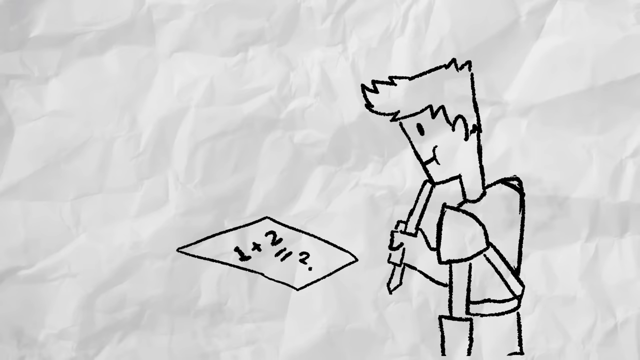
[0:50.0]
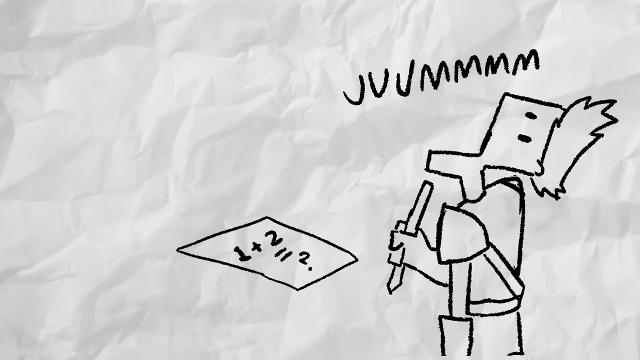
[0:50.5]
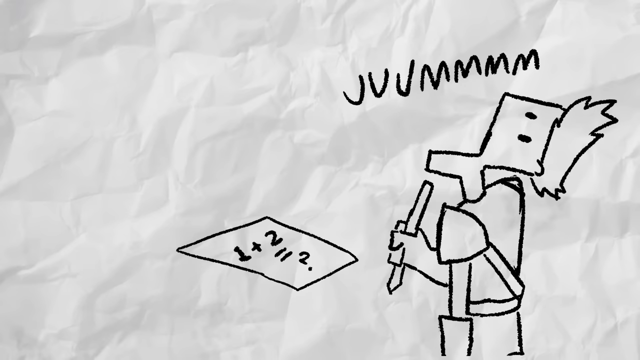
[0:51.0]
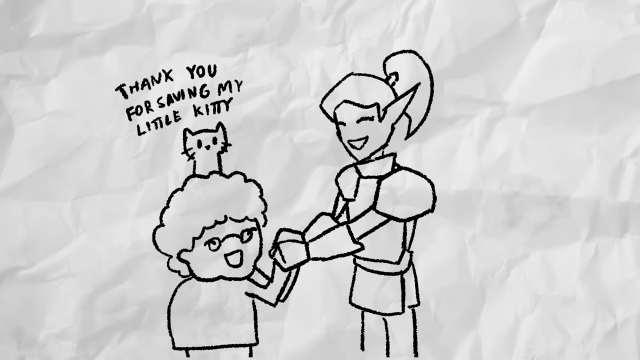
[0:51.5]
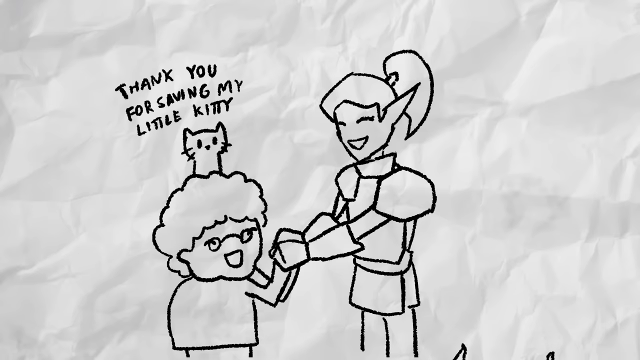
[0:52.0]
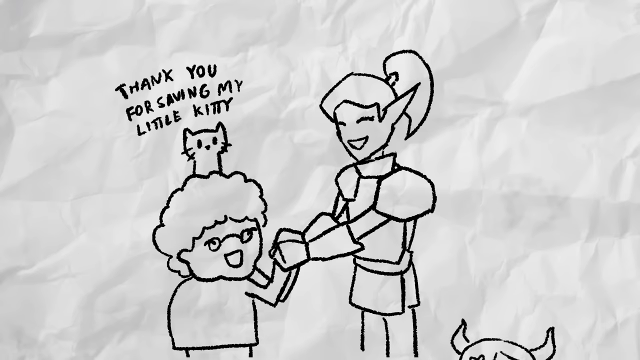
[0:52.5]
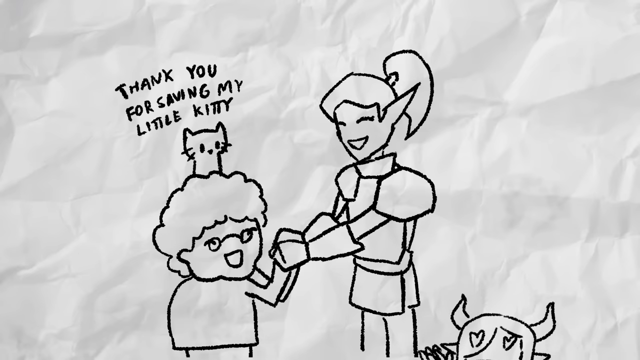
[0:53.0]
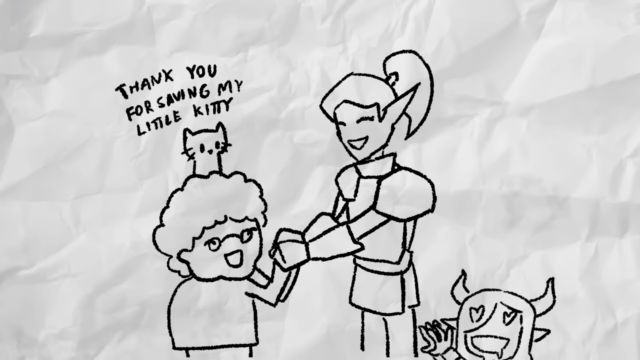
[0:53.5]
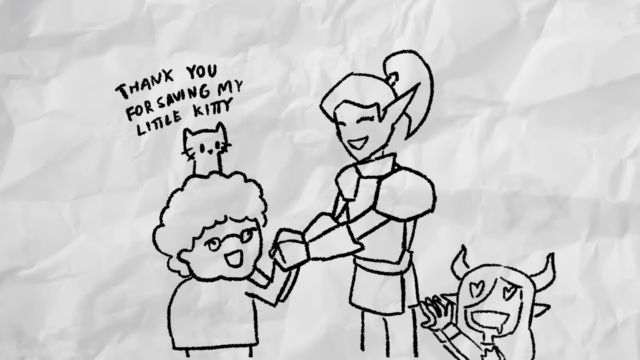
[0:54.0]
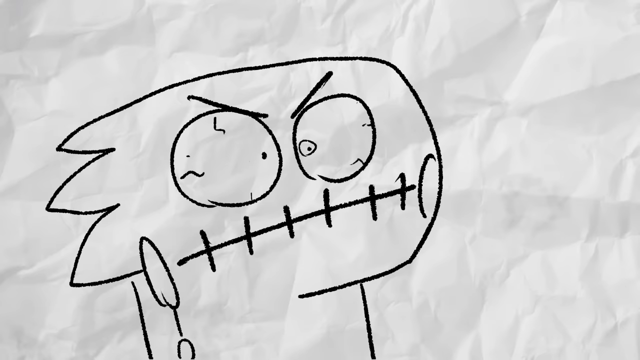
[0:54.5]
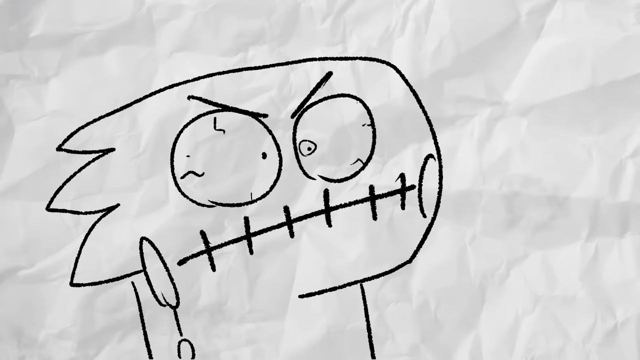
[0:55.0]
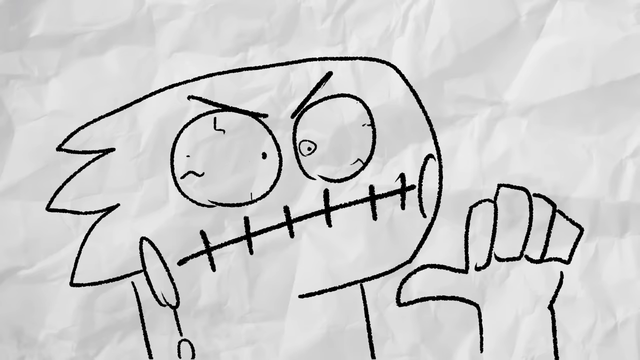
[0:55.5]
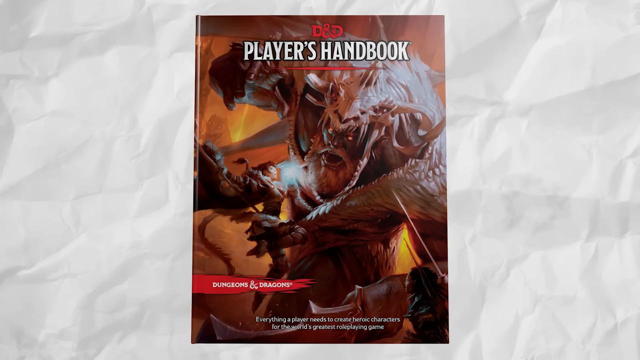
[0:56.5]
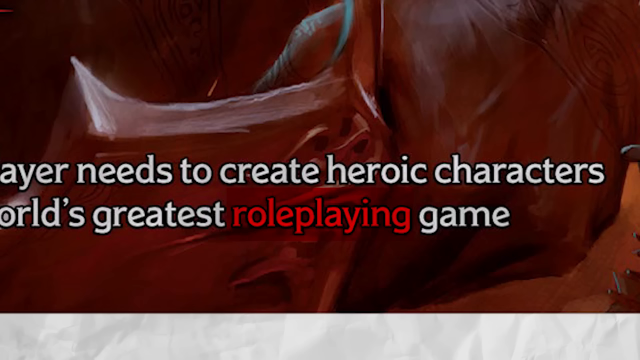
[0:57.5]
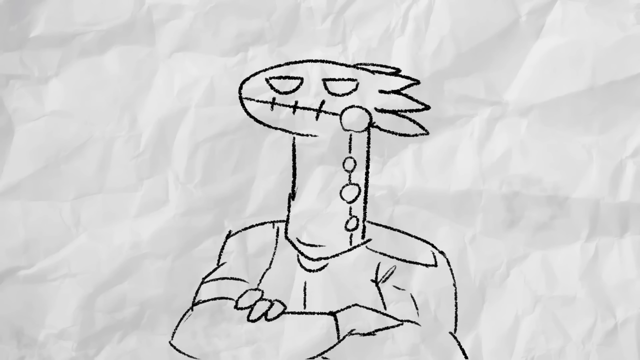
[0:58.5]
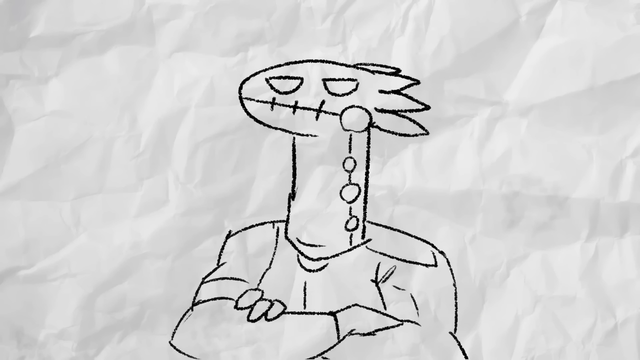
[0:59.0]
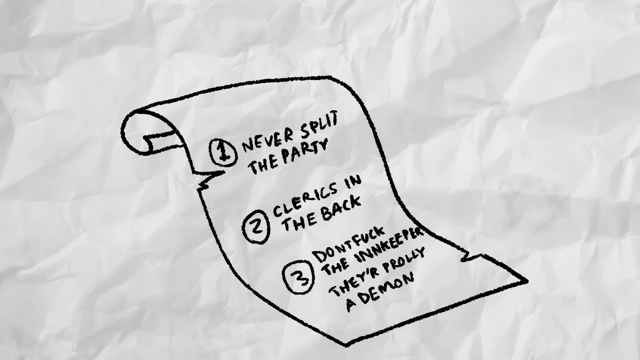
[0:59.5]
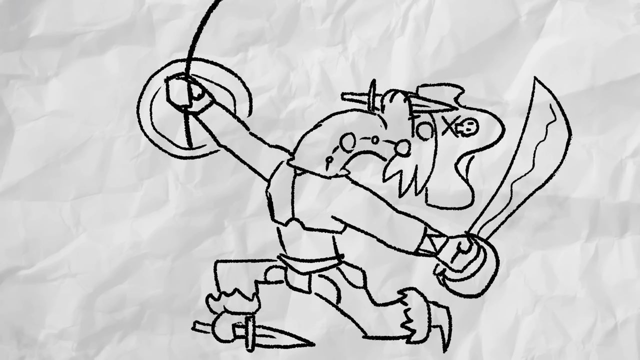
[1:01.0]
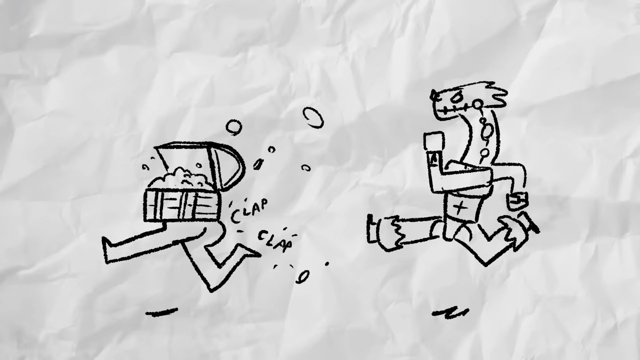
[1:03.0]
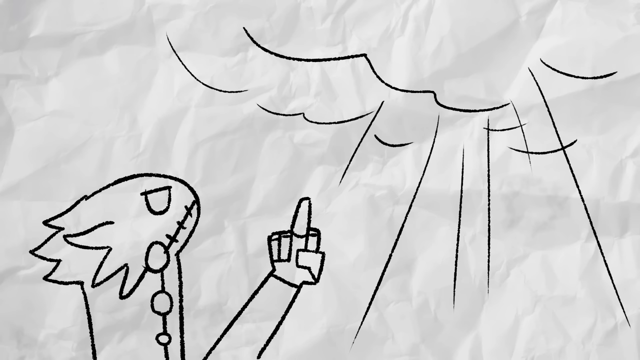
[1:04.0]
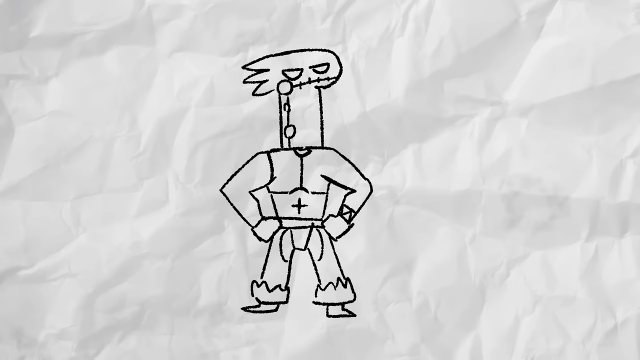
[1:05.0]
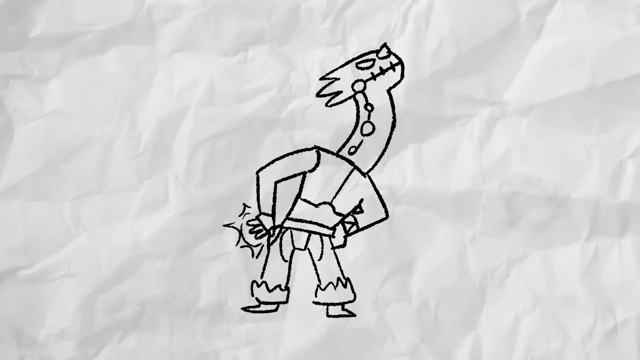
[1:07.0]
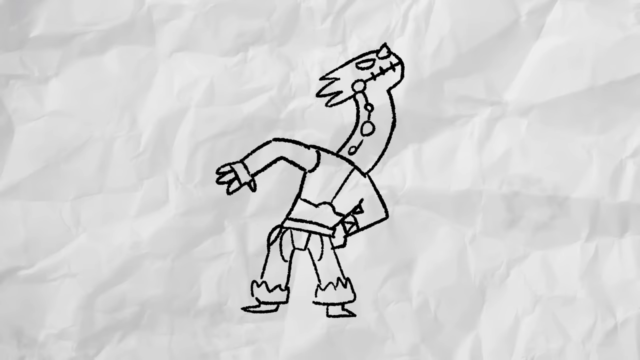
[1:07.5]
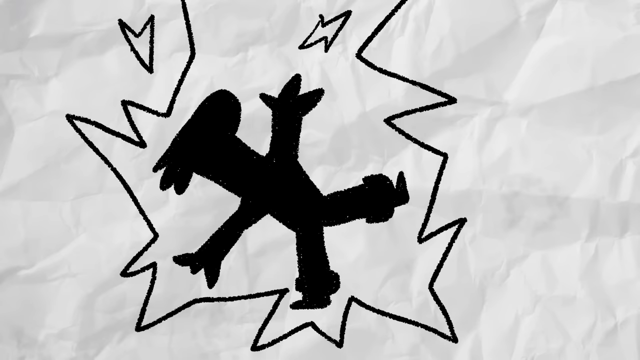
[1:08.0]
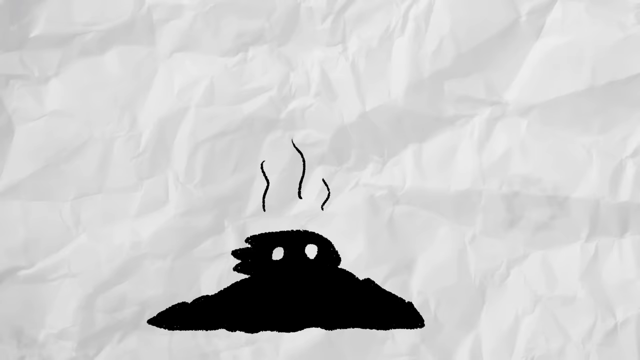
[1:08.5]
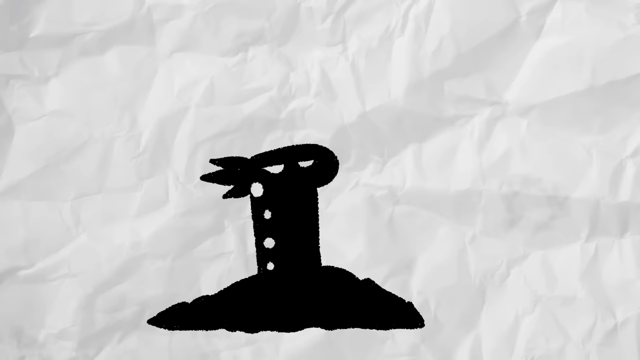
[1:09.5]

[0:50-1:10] Against a white crumpled paper background, a drawn character holds what looks to be a pencil, and a piece of paper on the ground says "1 plus 2 equals ?". He puts his head back with a bunch of scribble above him. The scene transitions to a drawing of a girl and a young boy with curly hair, with a cat behind him and text saying "thank you for saving my little kitty." A character with some thorns comes up from the bottom, lifting her arm out. Another character appears very close up, looking really mad; he lifts his hand and sticks his thumb out, pointing at himself. The scene transitions to a book in color that says "D&D, Player's Handbook, Dungeons and Dragons, everything a player needs to create heroic characters for the world's greatest roleplaying game," and it zooms in on the area where it says "roleplaying." One of the drawn characters crosses their arms. A piece of paper says "1, never split the party, 2, clerics in the back, 3, don't fuck the innkeeper, they're probably a demon." Another character with a sword in his hand bends back and sort of kneels forward. Another character runs at what looks to be a person's legs and a box of gold or something that says "clap clap." A character sticks his middle finger up at the sky. A character puts his hands on his hips and slaps his butt repeatedly. A character sort of goes crazy, moving around, and then appears to get burnt and falls to the ground.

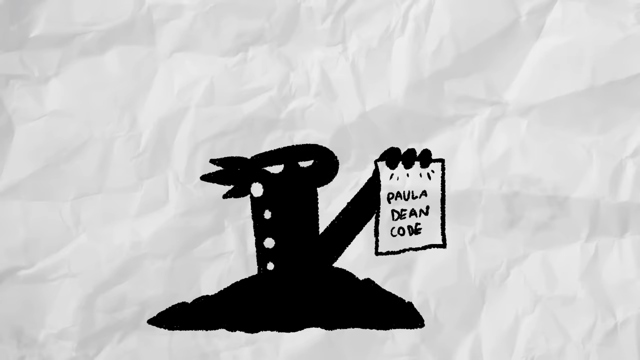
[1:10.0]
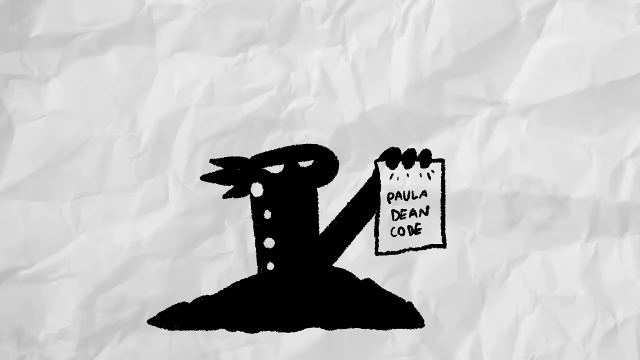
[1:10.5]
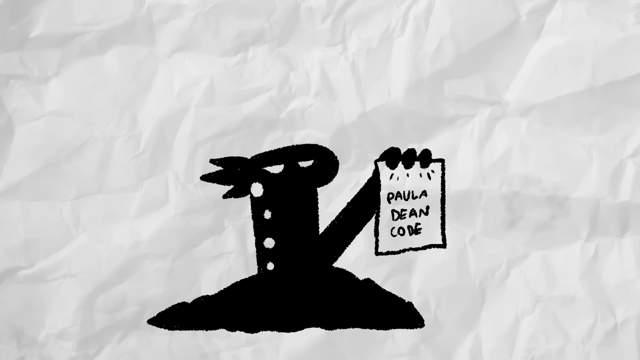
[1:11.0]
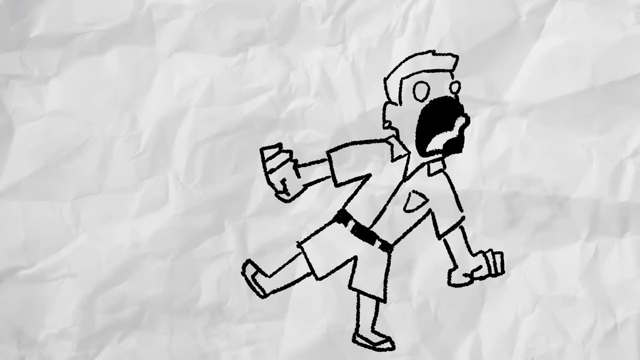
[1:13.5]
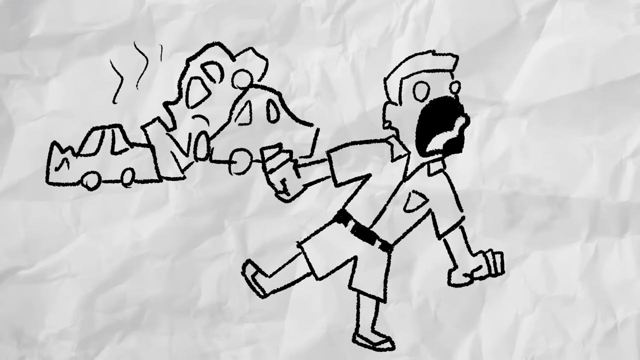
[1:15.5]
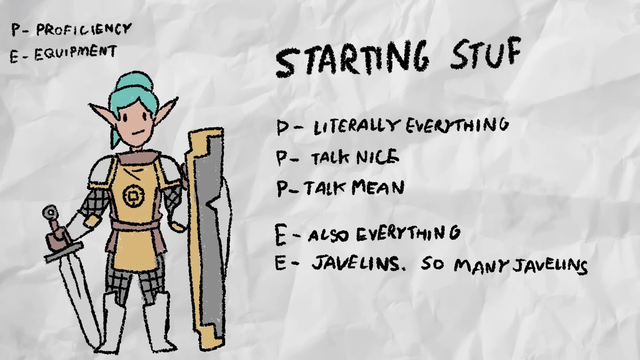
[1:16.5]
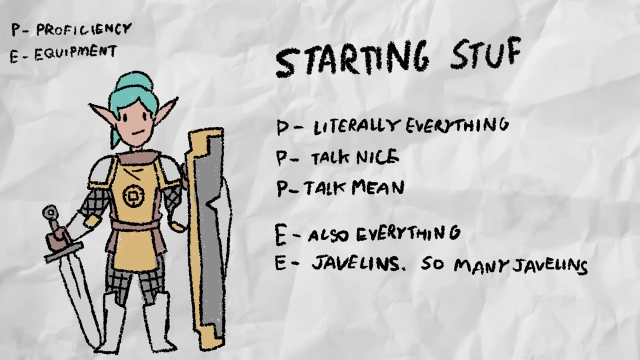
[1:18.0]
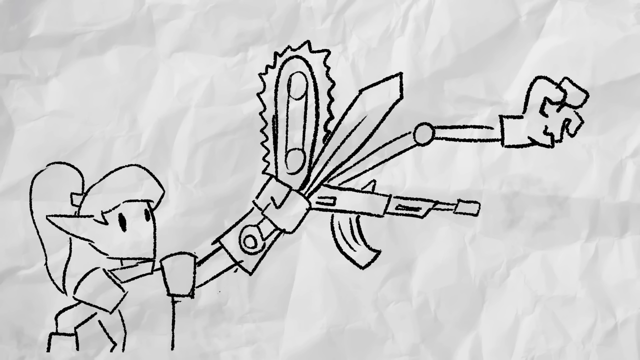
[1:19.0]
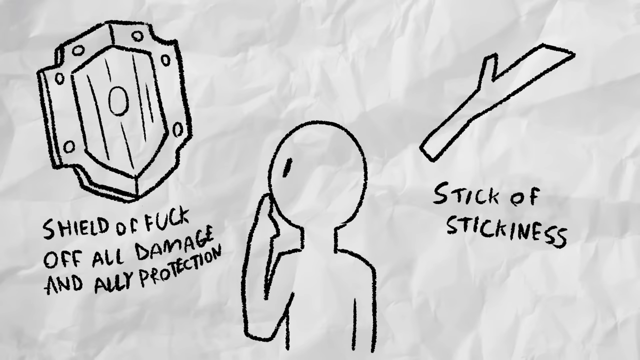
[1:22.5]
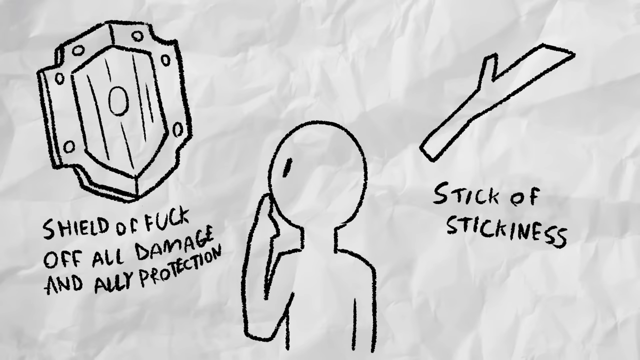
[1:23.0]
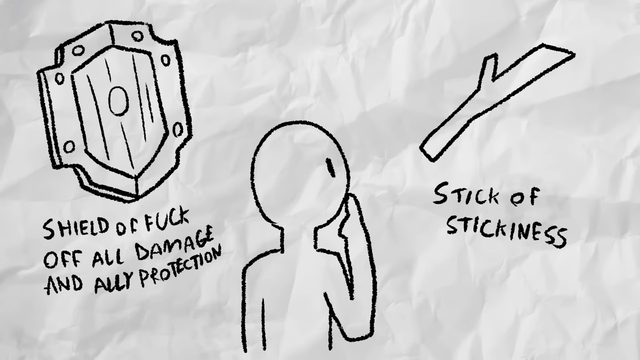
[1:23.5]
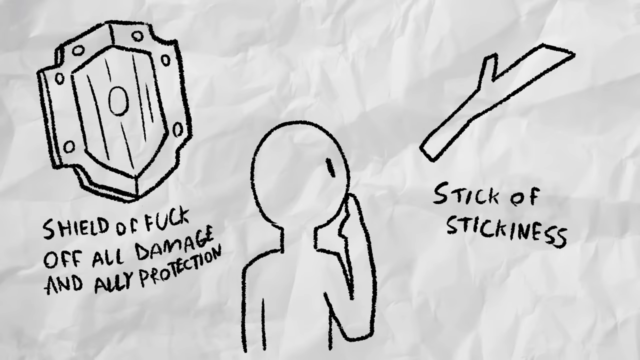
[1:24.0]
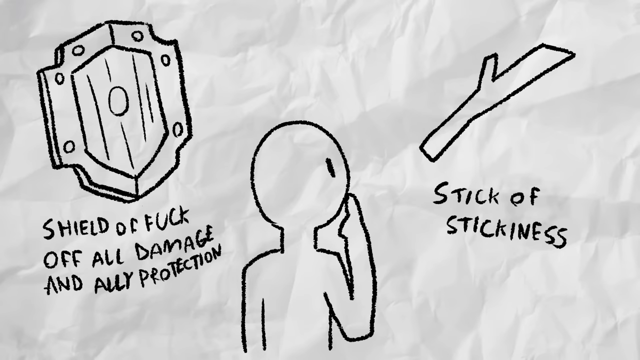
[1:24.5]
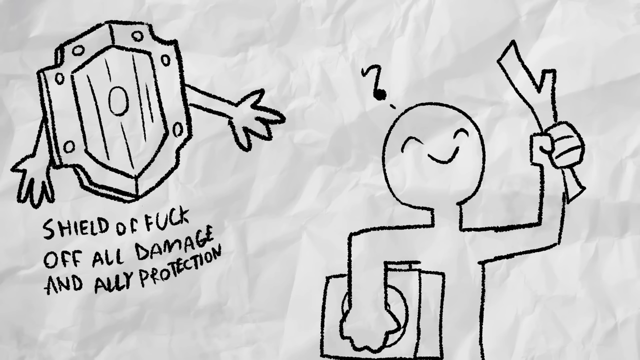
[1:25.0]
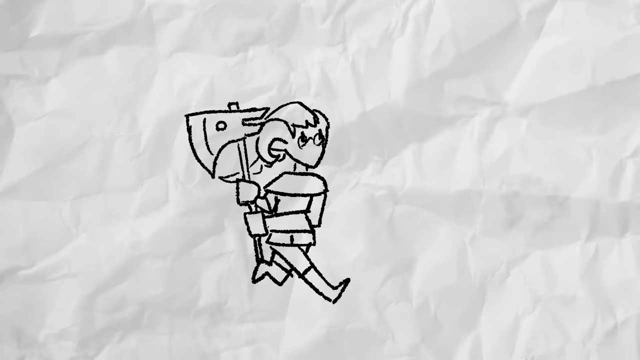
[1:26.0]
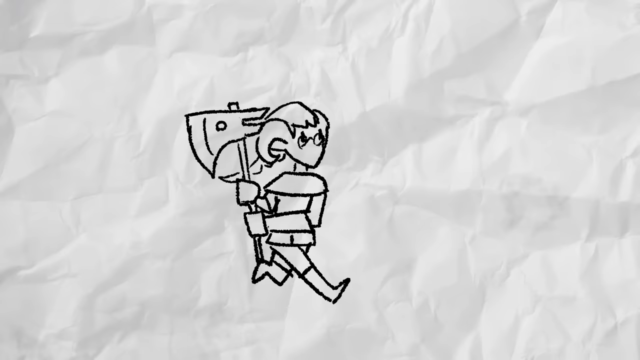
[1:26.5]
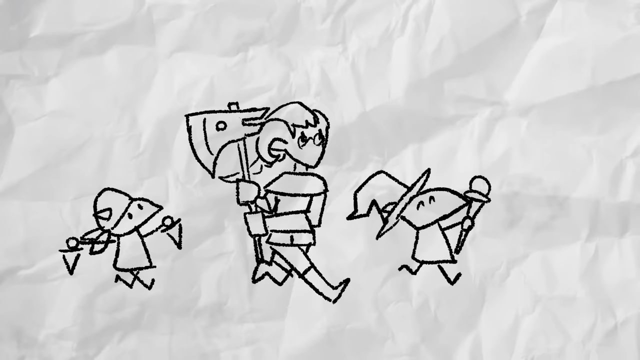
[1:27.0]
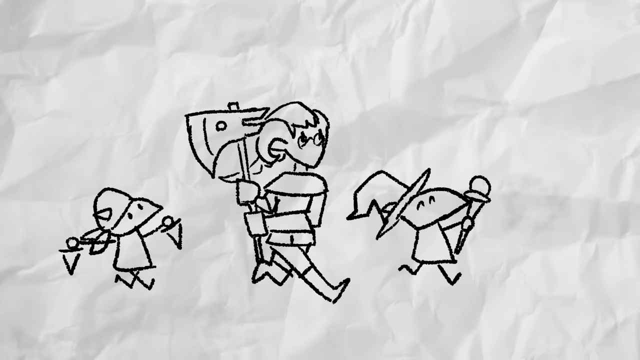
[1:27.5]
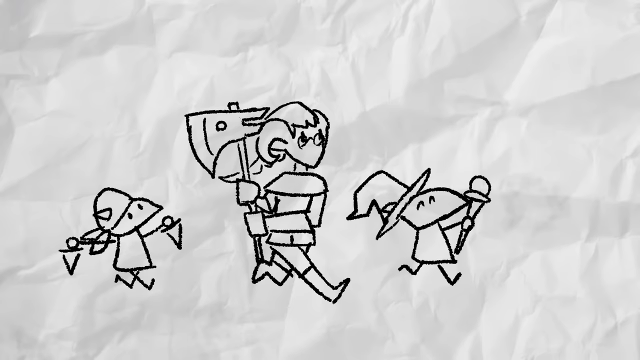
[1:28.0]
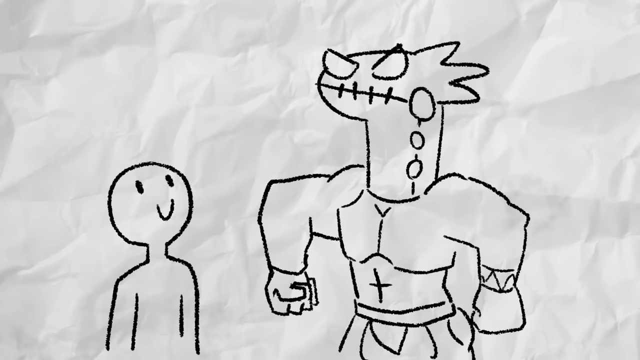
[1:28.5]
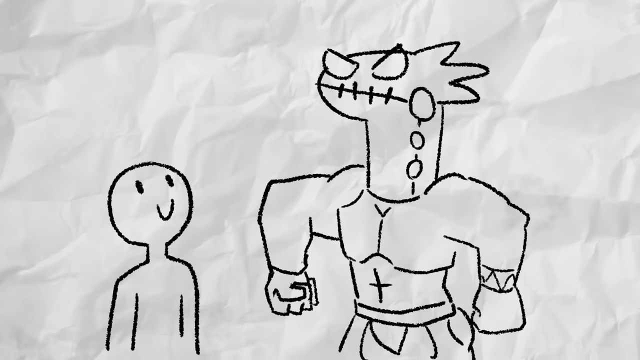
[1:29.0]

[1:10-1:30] A black character lies on the ground, holding up a piece of paper that says "Paula Deen Code," with a white crumpled paper background. Another character, a person, comes in looking like he is screaming, with his hands clenched, standing on one foot, while cars in the background get into an accident. The scene transitions to text that says "starting stuff. P literally everything, P talk nice, P talk mean, E also everything, E javelins, so many javelins," with "proficiency and equipment" at the top left. A drawing in color shows a character with a sword, apparently fighting something.